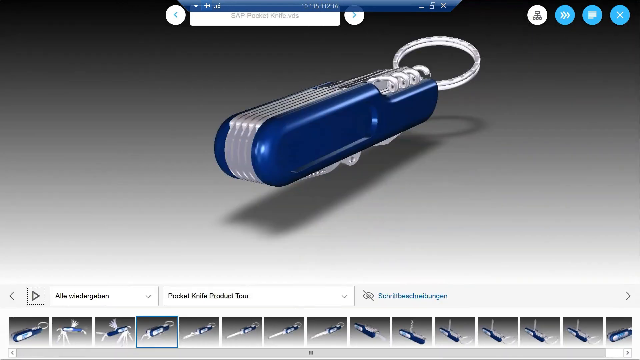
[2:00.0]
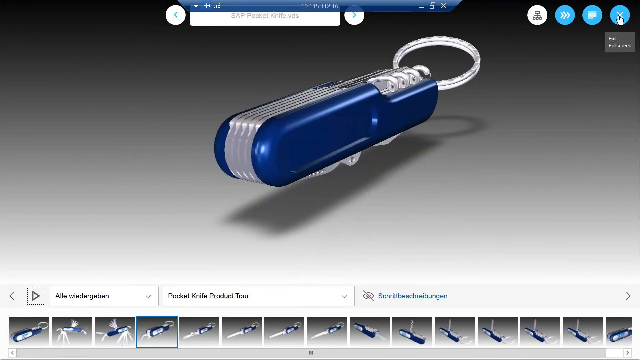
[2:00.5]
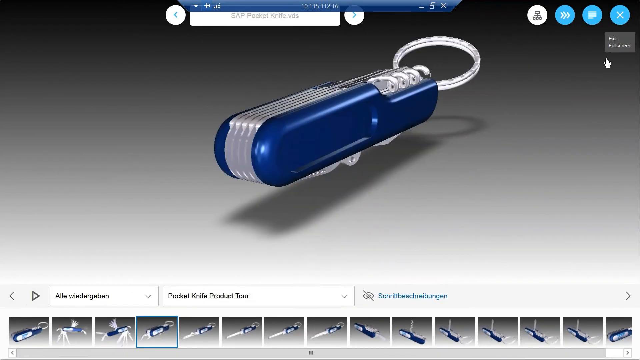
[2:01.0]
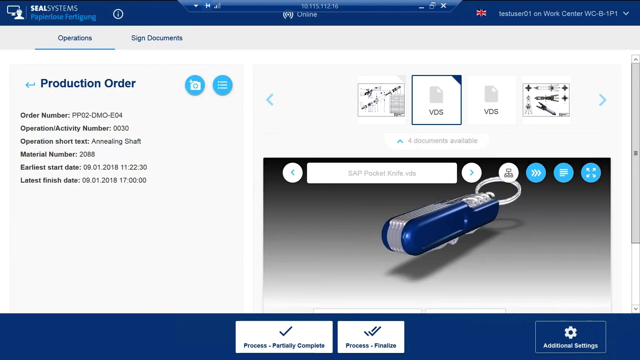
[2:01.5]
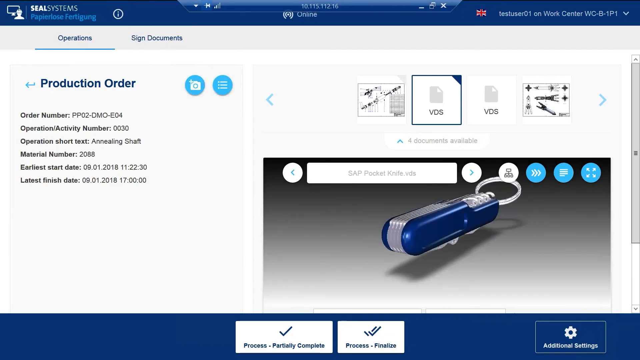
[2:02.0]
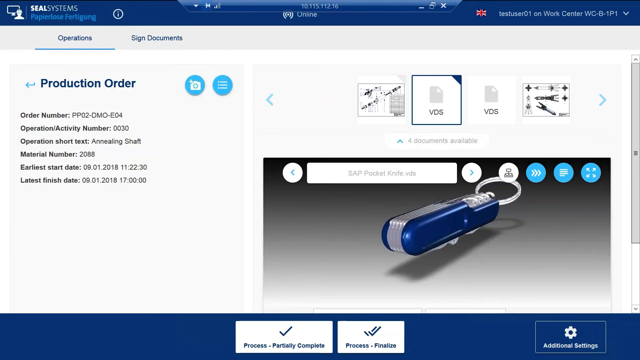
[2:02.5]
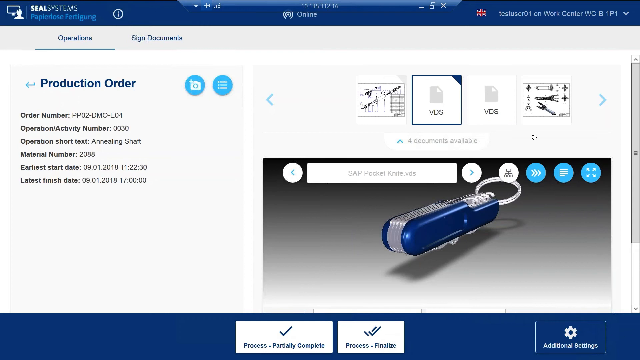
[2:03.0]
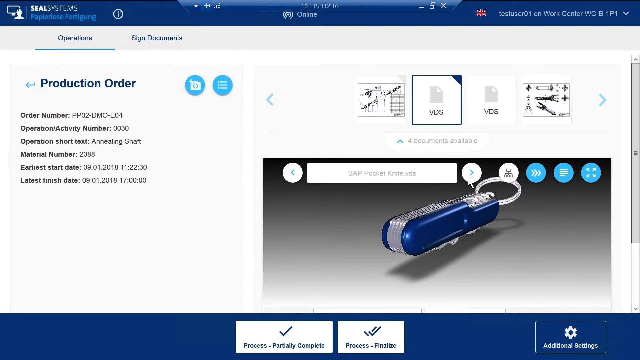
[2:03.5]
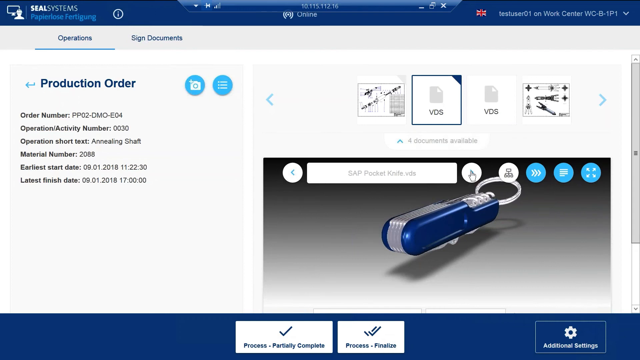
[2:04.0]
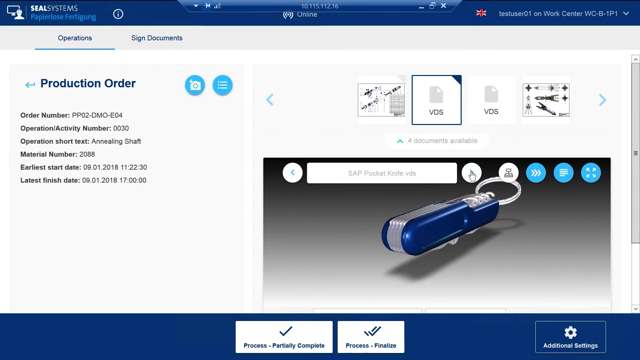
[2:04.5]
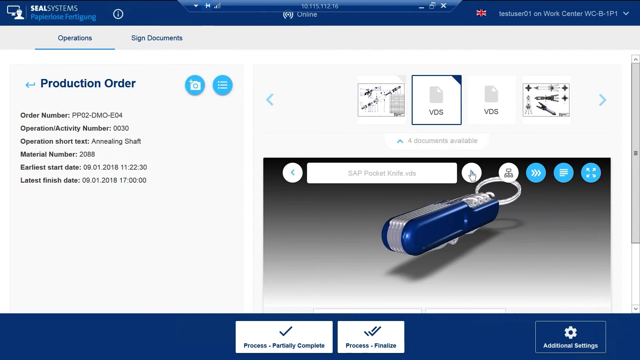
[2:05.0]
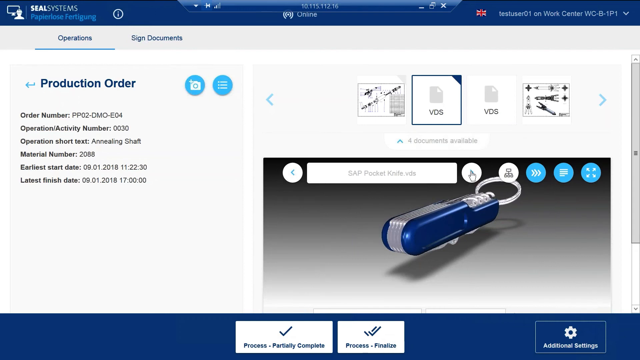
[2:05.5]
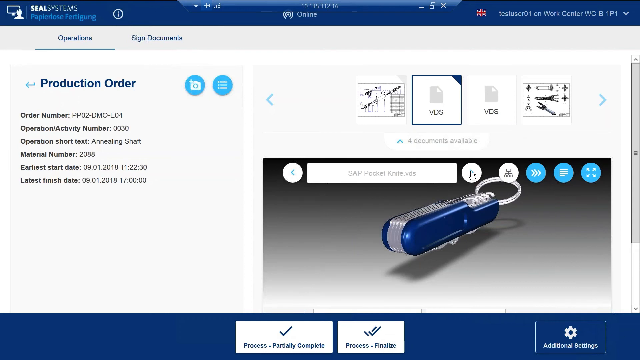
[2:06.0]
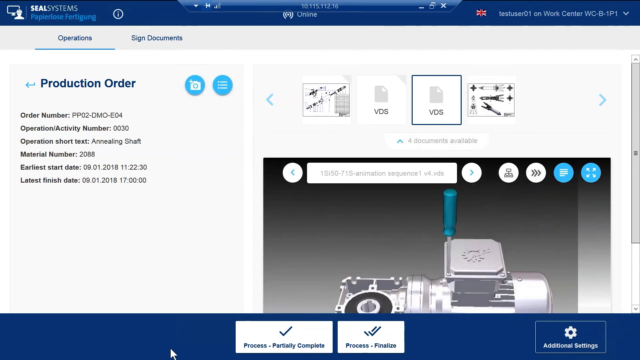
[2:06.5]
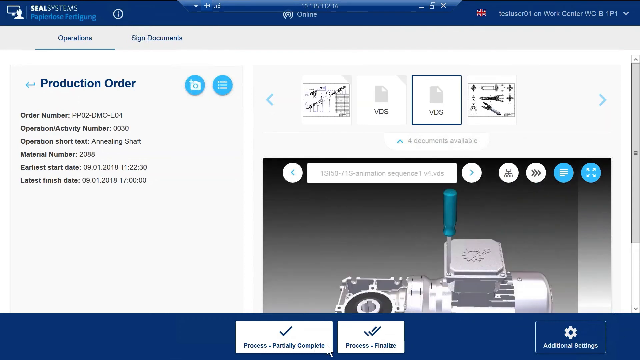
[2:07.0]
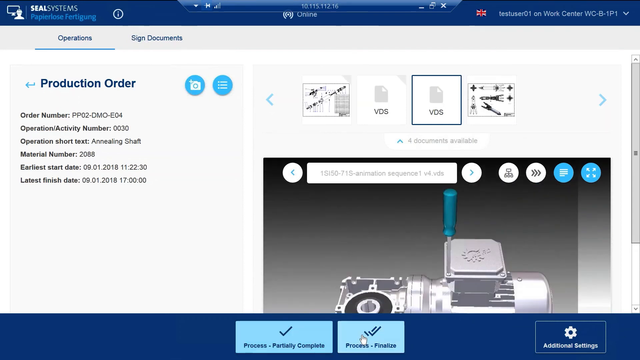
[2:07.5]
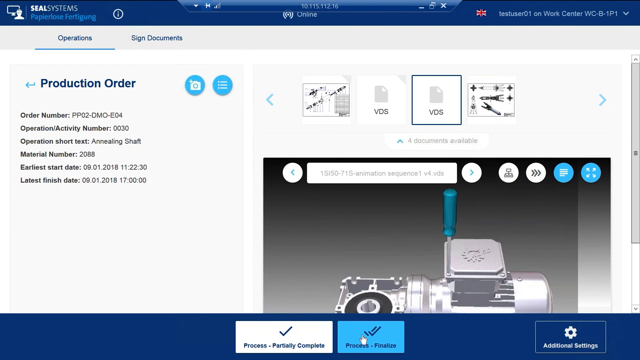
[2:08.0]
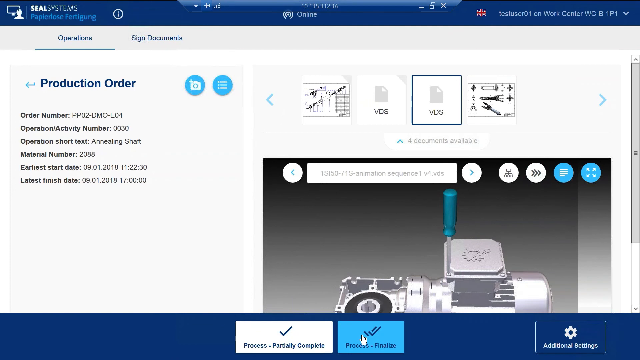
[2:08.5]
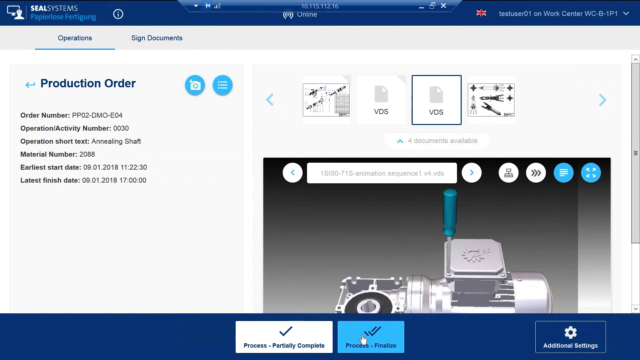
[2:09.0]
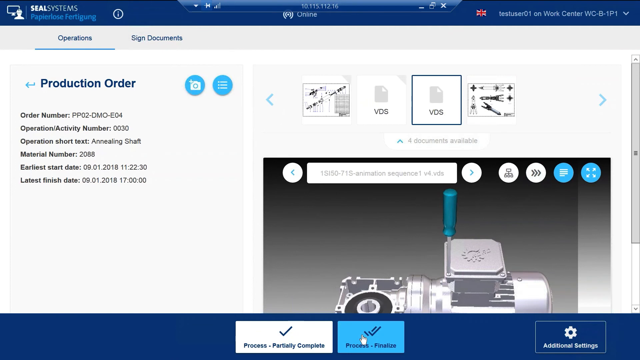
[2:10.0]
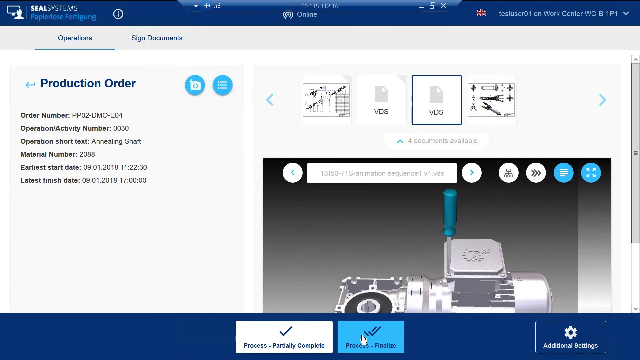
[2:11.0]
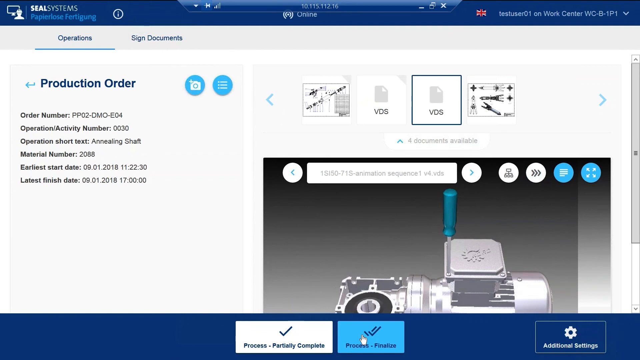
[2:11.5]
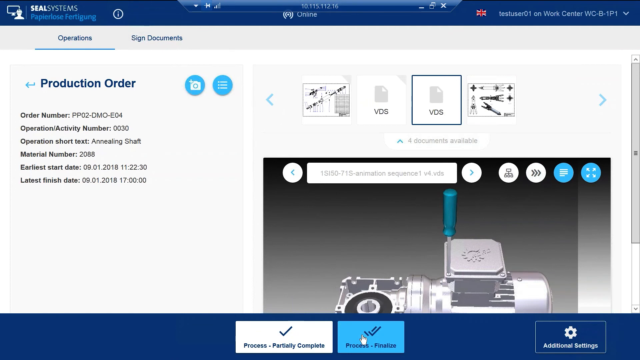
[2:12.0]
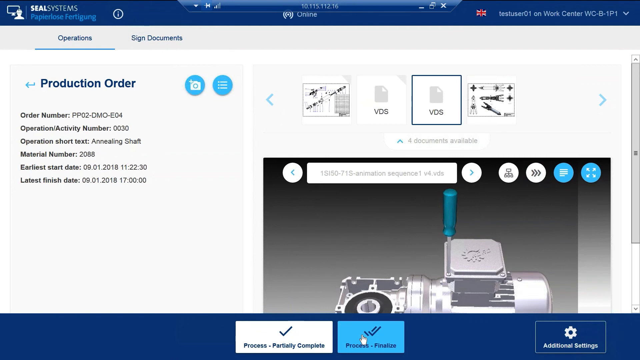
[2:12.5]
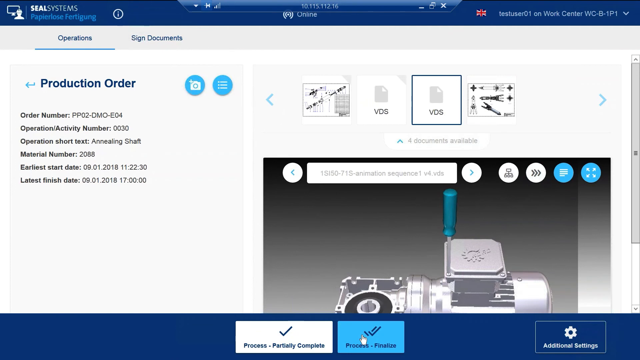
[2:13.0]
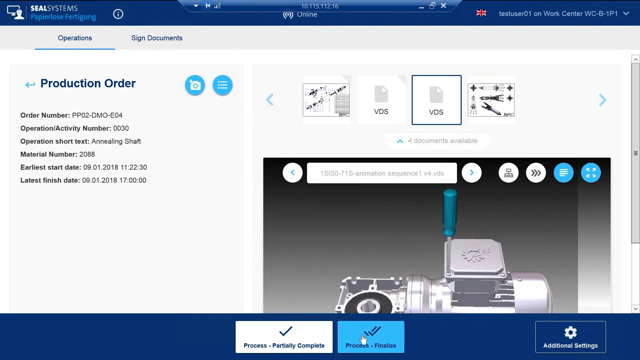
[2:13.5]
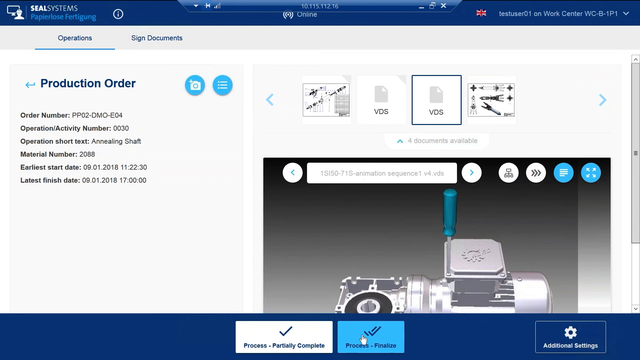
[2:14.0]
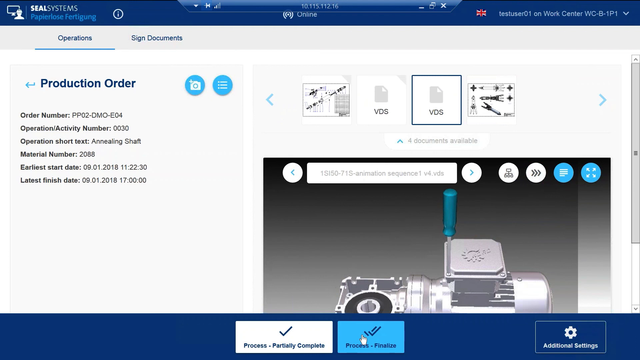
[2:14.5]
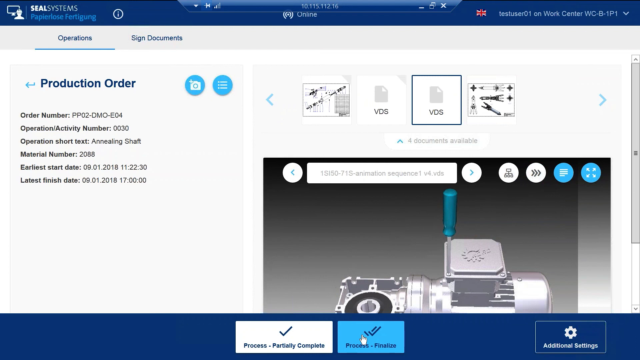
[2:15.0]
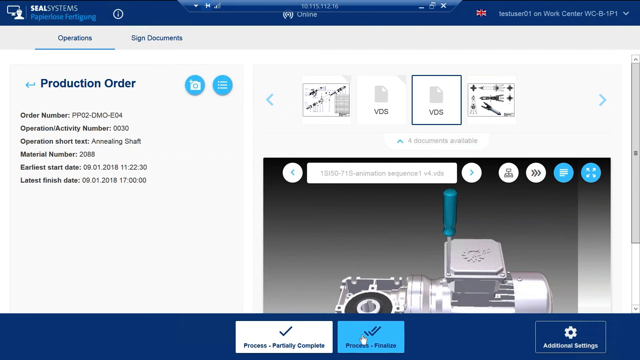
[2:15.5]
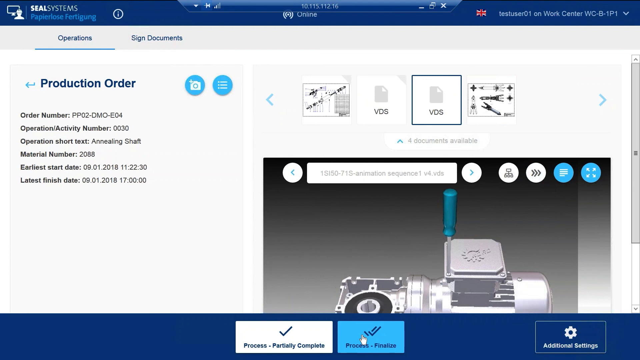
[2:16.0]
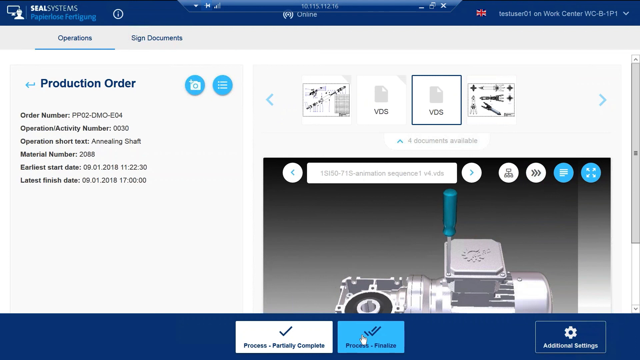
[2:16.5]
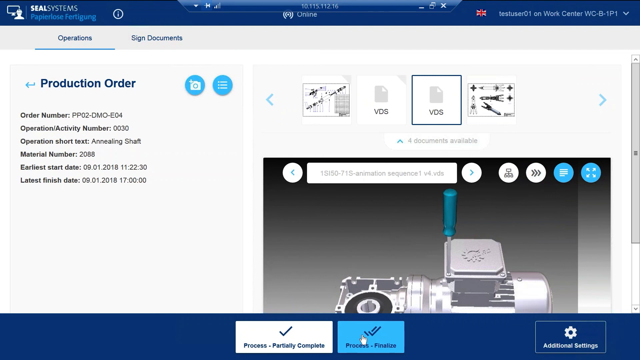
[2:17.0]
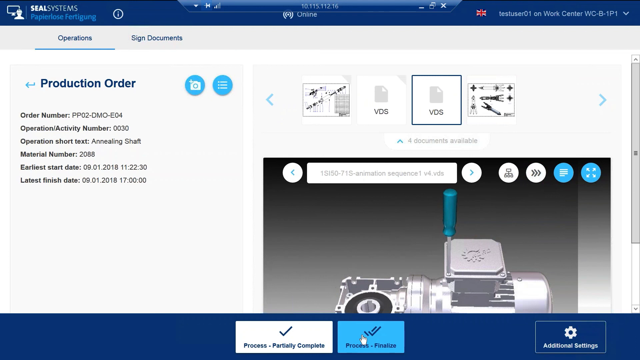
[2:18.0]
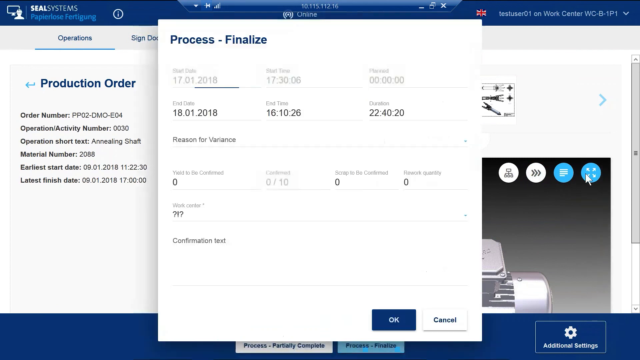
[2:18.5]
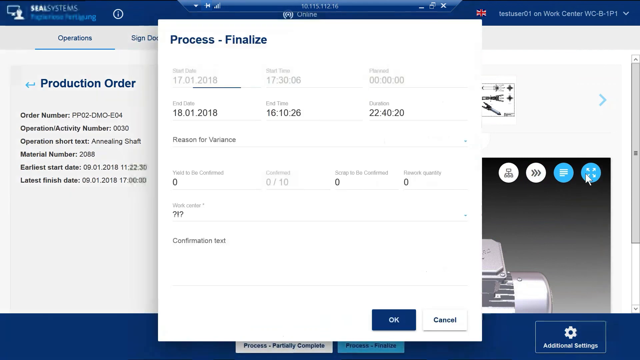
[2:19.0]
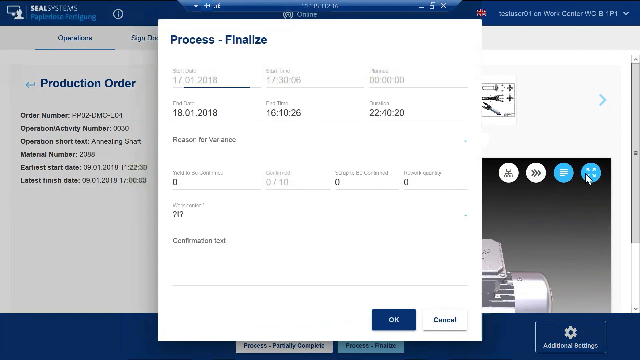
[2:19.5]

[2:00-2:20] The 3D render of the pocket knife is on screen at first, then quickly disappears as the user appears to go back to an earlier page. This page shows a production order, with a list of information about the order on the left side and, on the right side, some images that look like 3D images connected to the order. The order is for something called an annealing shaft. The user selects the third image across, a VDS file, which shows a different image of some kind of mechanical object. The user then appears to select a button on the bottom control panel that says "process finalize". This loads a pop-up on the screen showing an embedded form with different options.